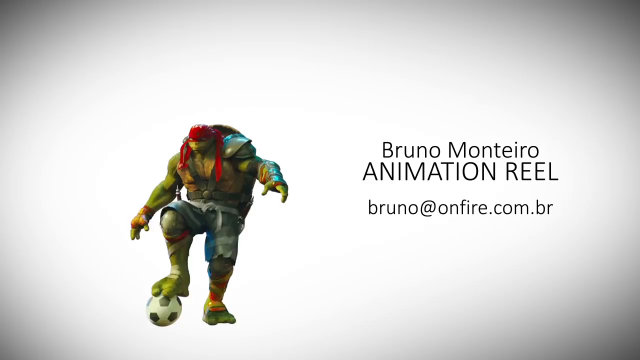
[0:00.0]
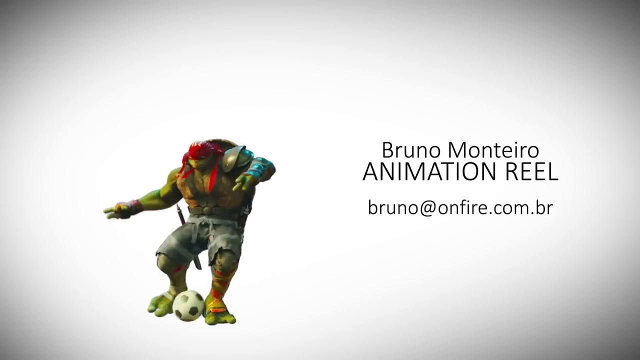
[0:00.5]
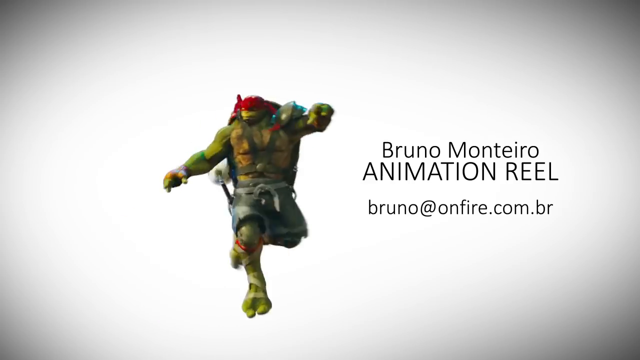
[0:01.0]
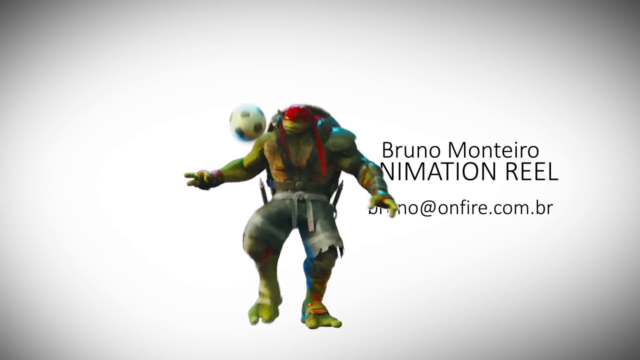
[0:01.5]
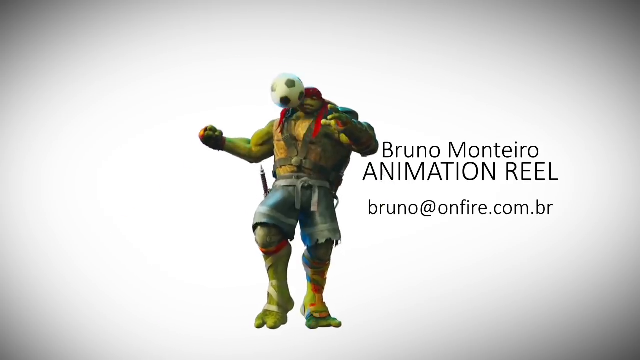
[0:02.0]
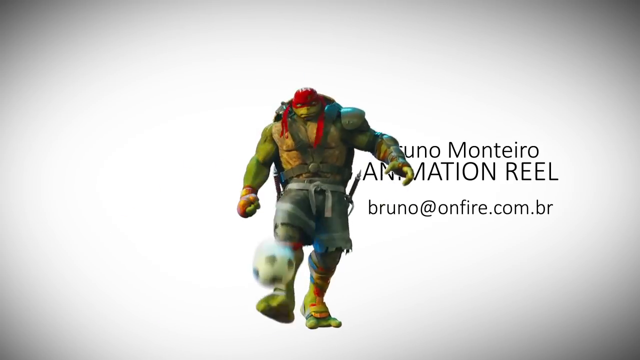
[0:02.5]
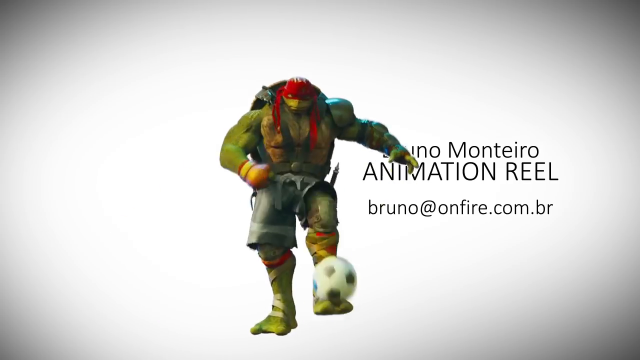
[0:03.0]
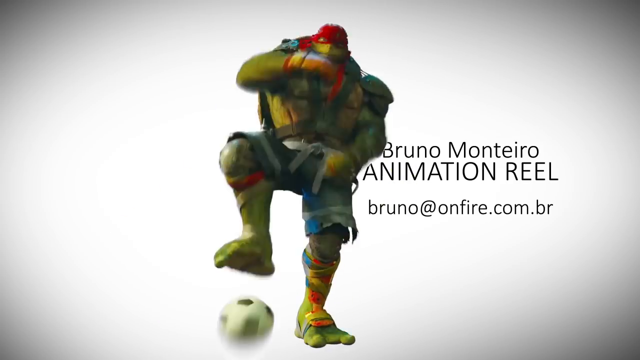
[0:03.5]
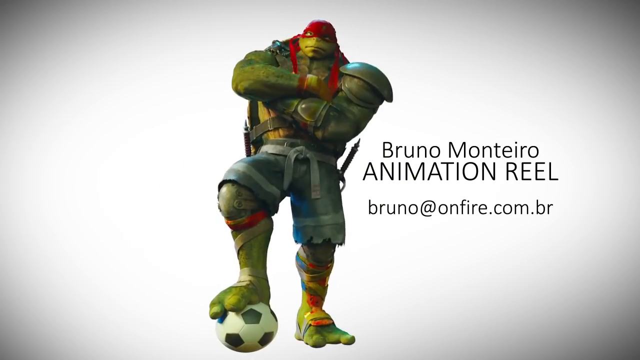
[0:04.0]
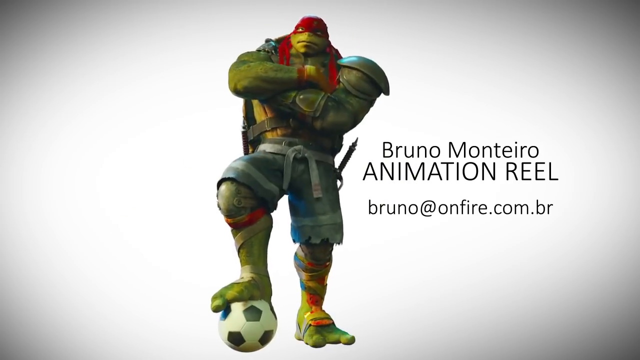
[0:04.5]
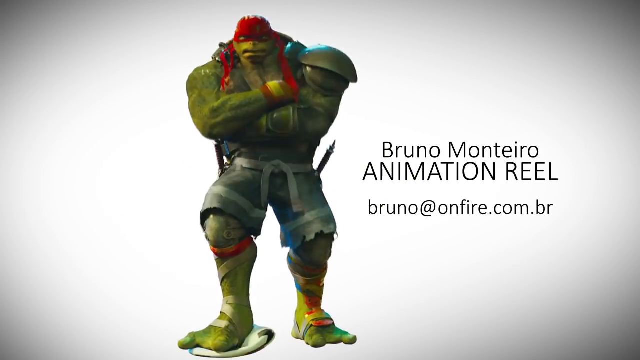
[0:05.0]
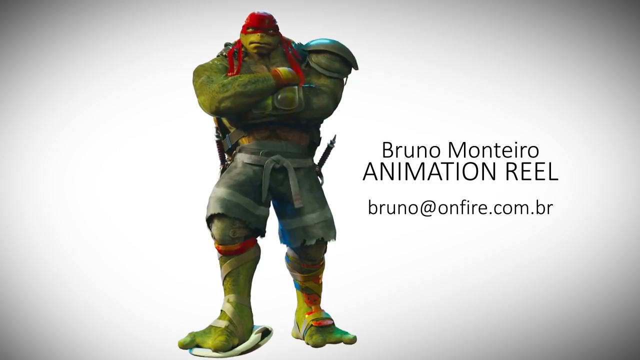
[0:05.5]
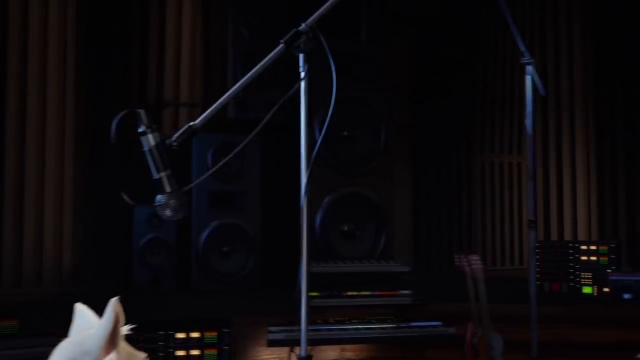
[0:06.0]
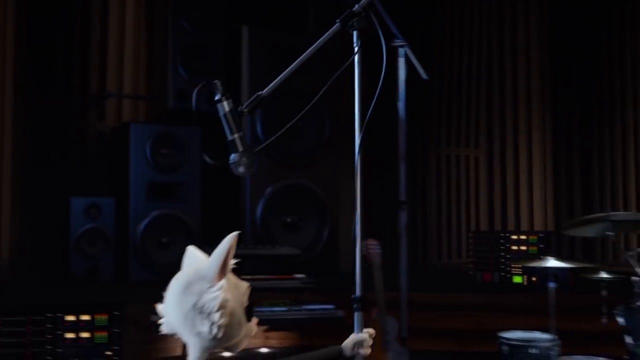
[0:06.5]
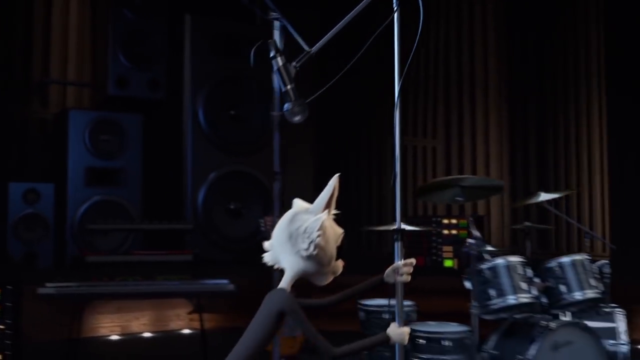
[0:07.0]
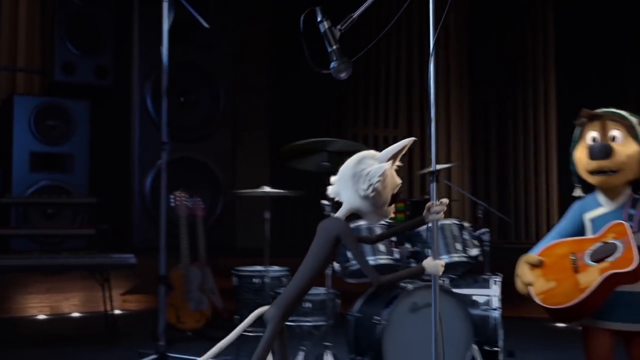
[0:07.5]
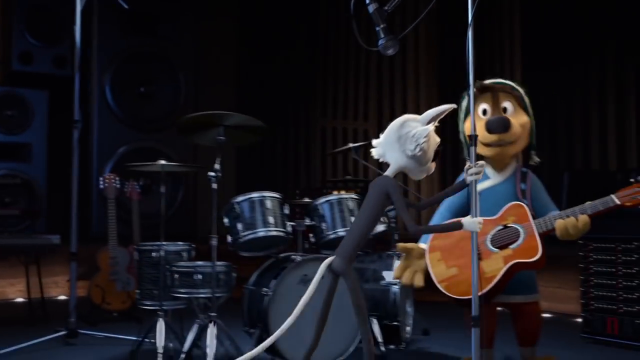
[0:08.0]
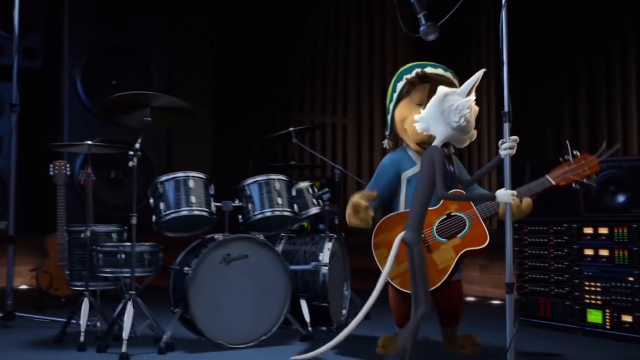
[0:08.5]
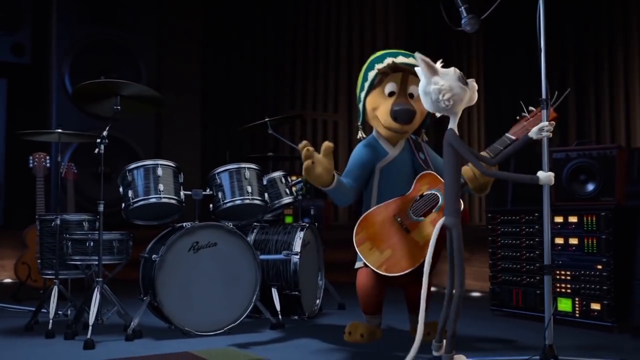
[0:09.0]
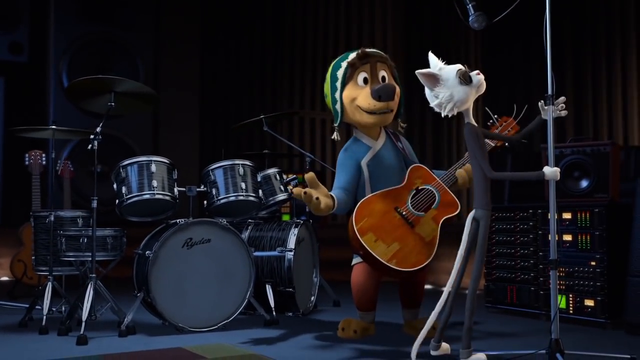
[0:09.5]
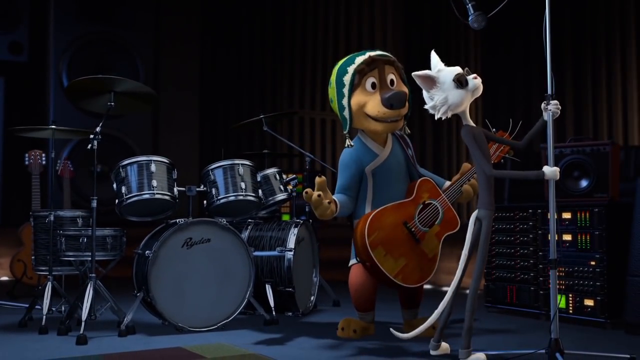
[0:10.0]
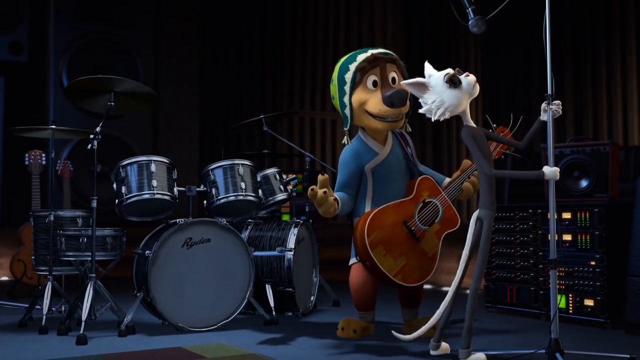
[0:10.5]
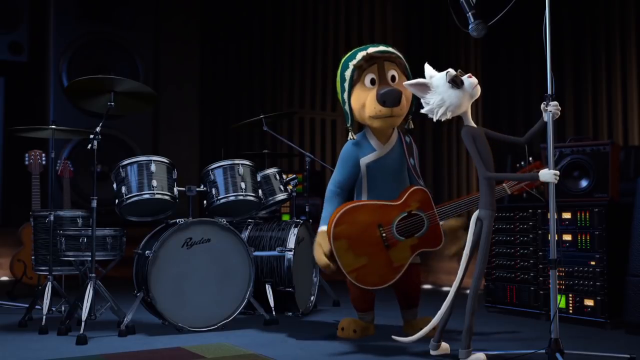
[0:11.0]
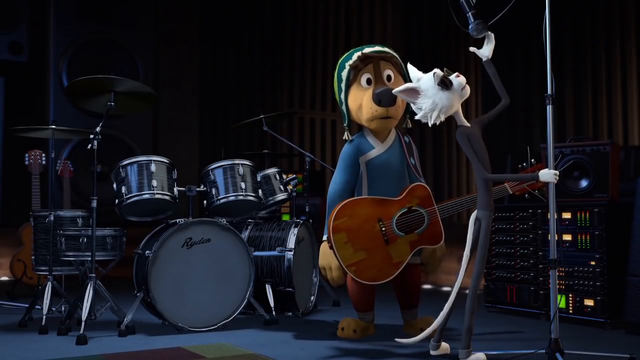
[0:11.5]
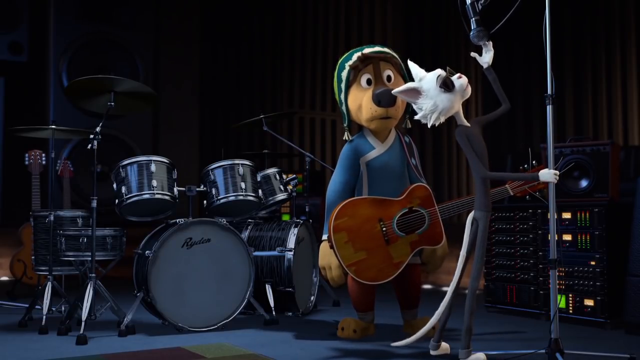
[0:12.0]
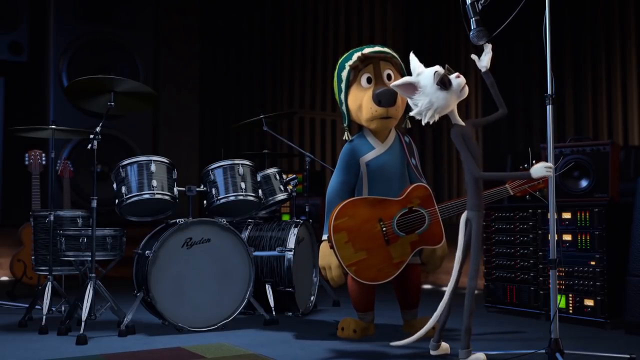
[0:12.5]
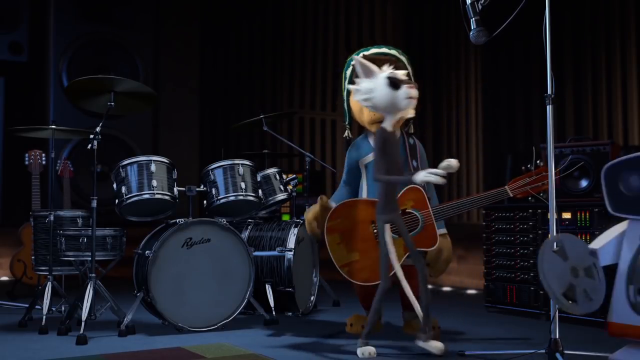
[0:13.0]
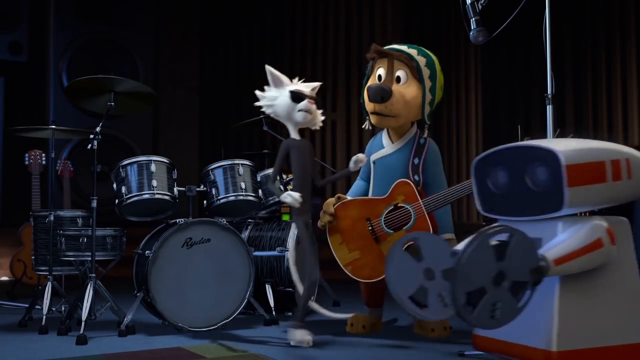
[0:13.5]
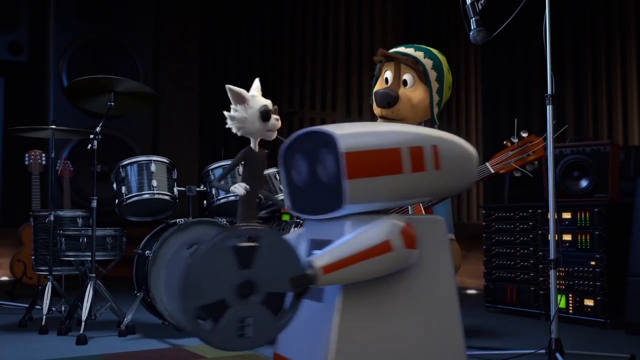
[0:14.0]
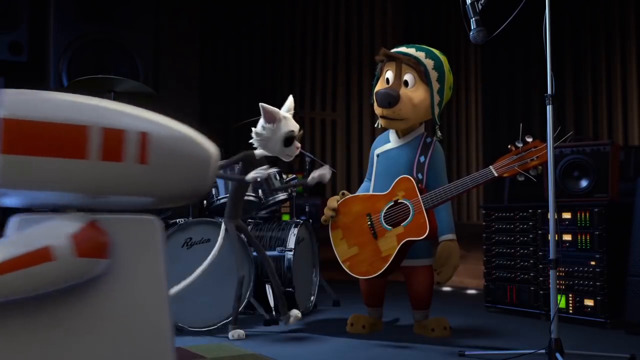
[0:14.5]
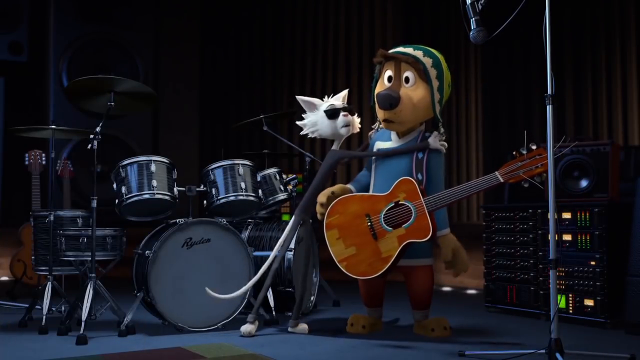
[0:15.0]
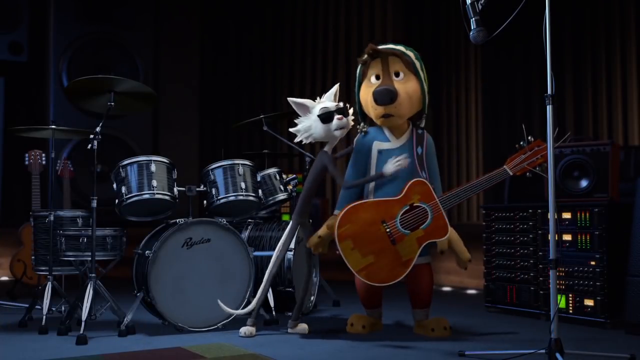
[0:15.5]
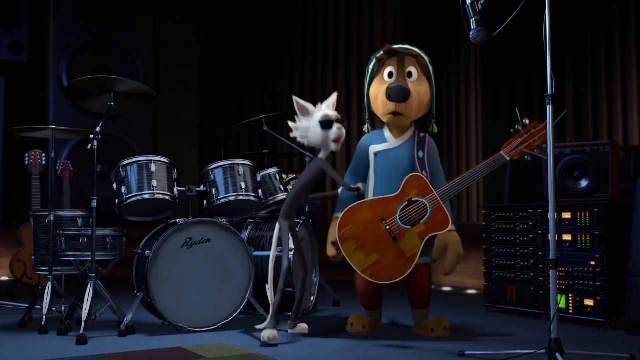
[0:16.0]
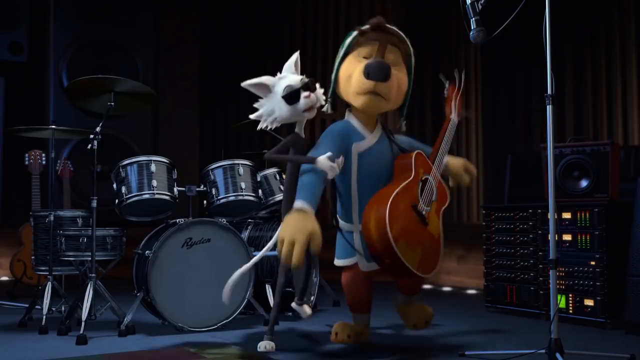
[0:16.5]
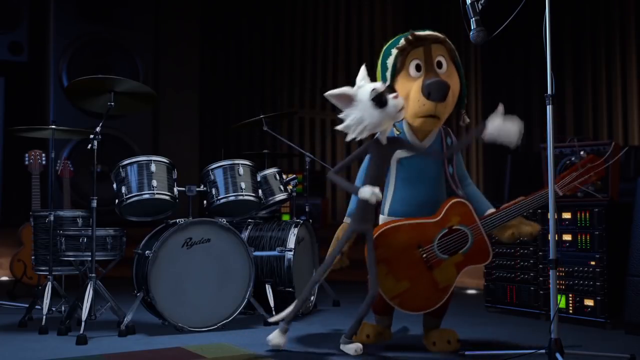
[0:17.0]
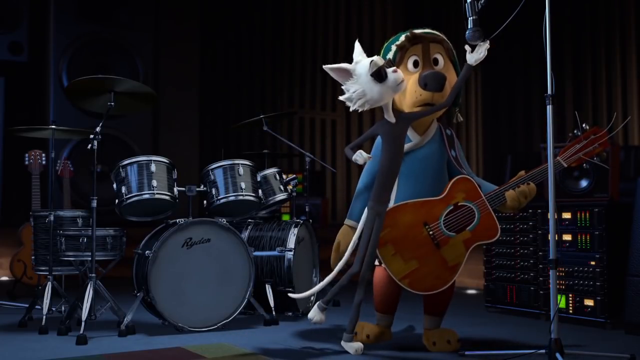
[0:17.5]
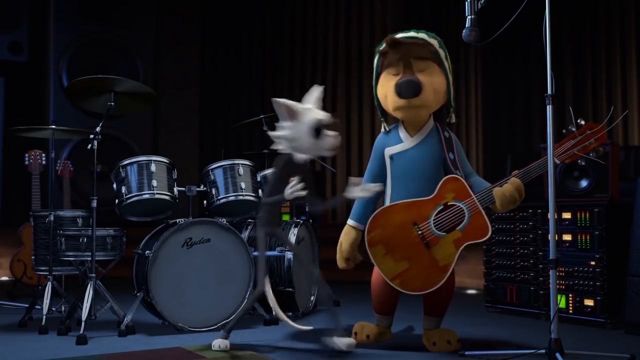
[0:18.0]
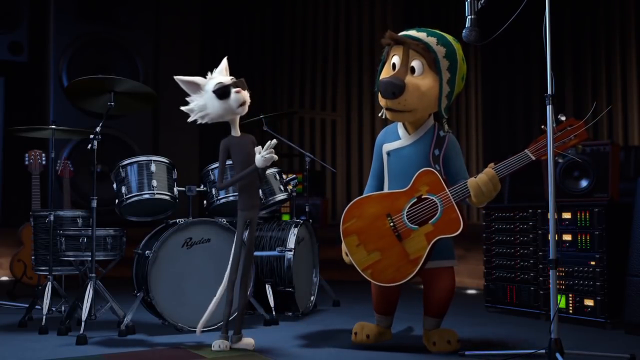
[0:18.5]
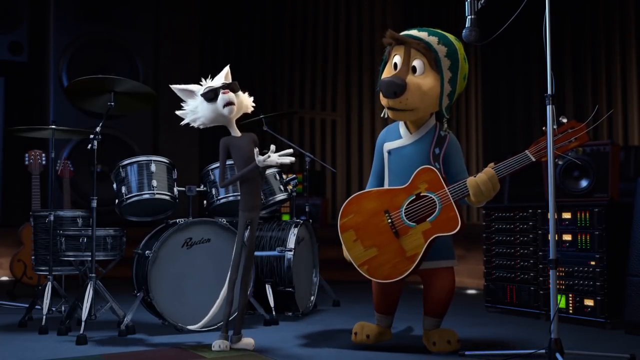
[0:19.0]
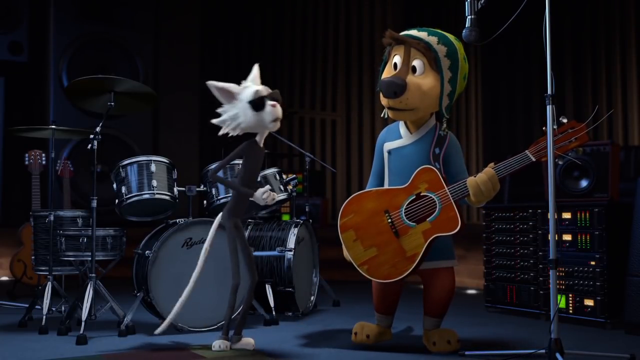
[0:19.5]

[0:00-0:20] A Teenage Mutant Ninja Turtle stands with a red rag around his head and a soccer ball under his right foot, balancing as he gets ready to play soccer. Text on the right side of the screen reads "Bruno Montero Animation Reel bruno at homefire.com.br". The video then starts, and the ninja turtle immediately begins playing, kicking the soccer ball around; the movement is very realistic and looks natural. The scene changes to a sleek-looking white cat wearing black glasses and a black outfit, pushing a microphone out onto a stage. Drum sets, guitars, large speakers and amplifiers are in the background of this musical stage set. Standing front and center behind the cat is a dog in a green knitted cap and a blue sweater vest, wearing a guitar around his neck, possibly as the band's singer. After pushing the microphone out, the cat pushes the dog over to the mic and tells him what he expects, clearly running the show.